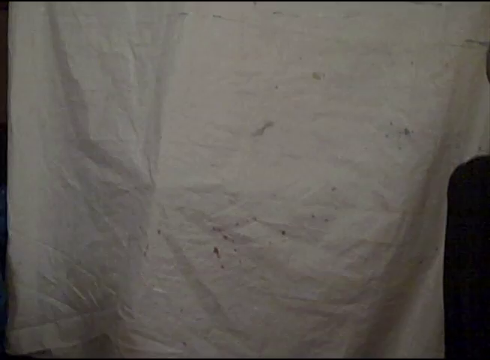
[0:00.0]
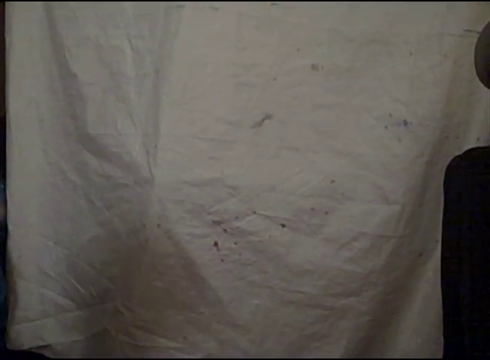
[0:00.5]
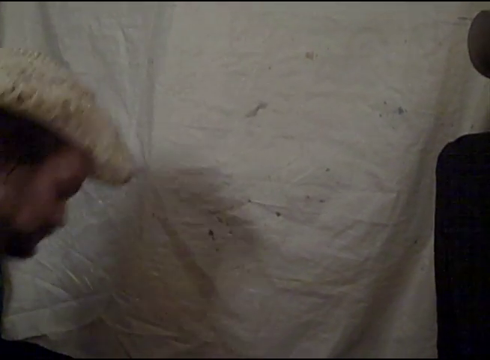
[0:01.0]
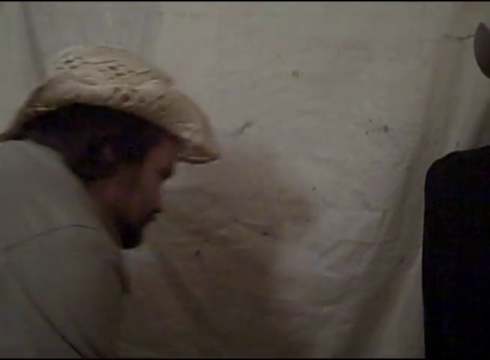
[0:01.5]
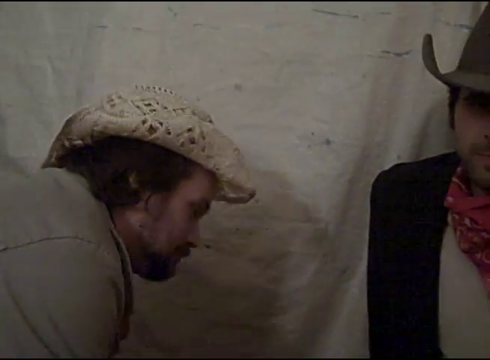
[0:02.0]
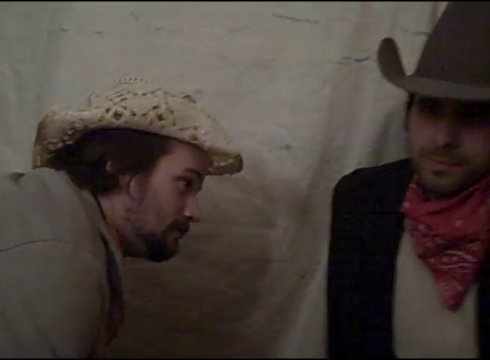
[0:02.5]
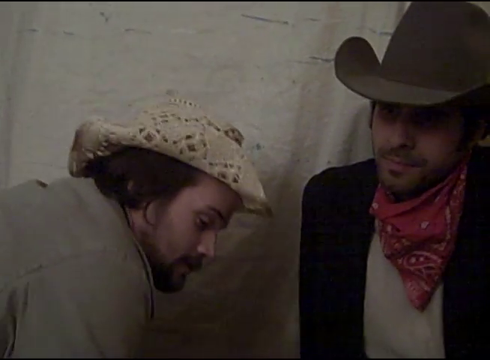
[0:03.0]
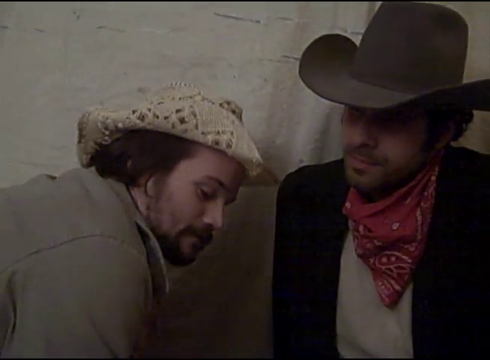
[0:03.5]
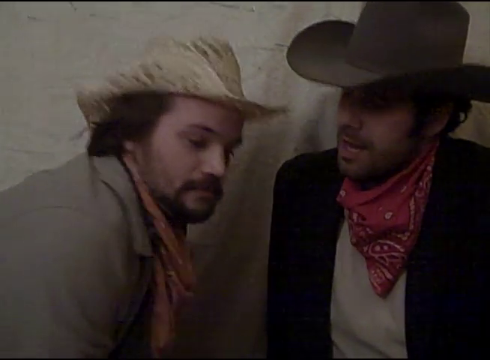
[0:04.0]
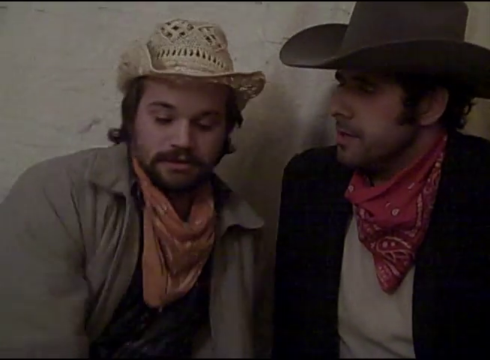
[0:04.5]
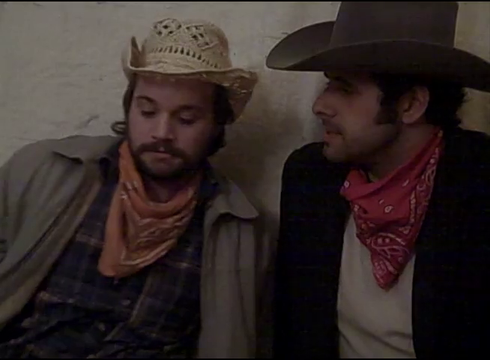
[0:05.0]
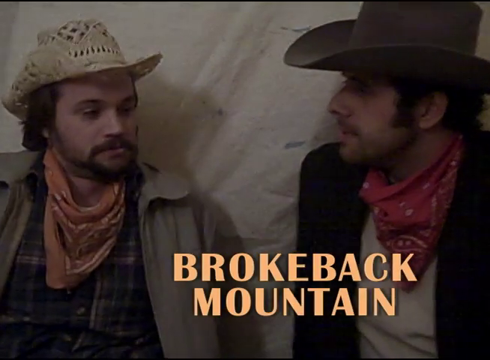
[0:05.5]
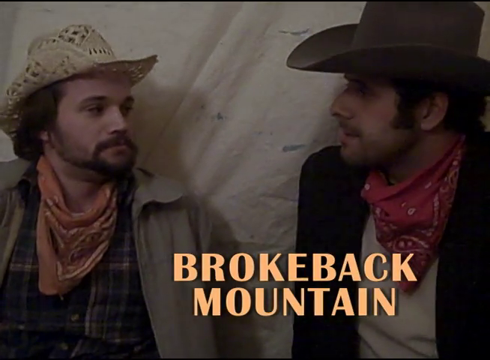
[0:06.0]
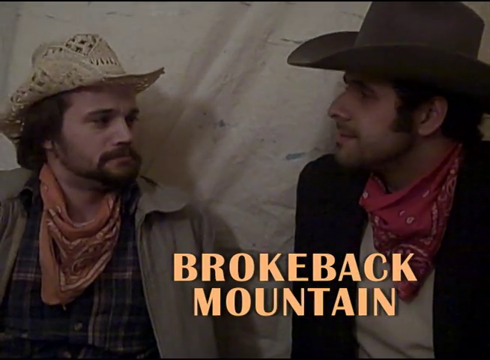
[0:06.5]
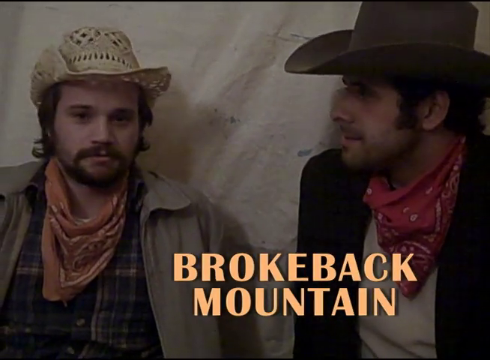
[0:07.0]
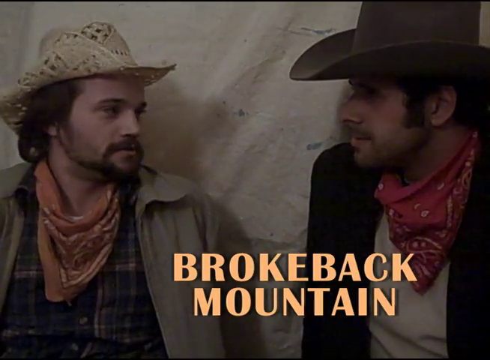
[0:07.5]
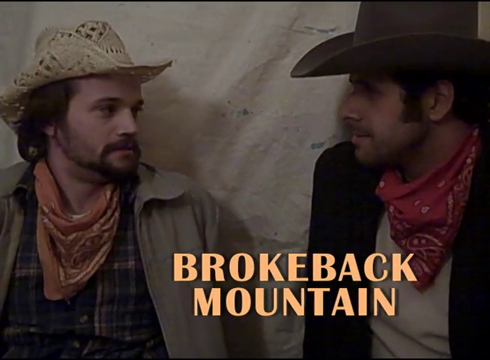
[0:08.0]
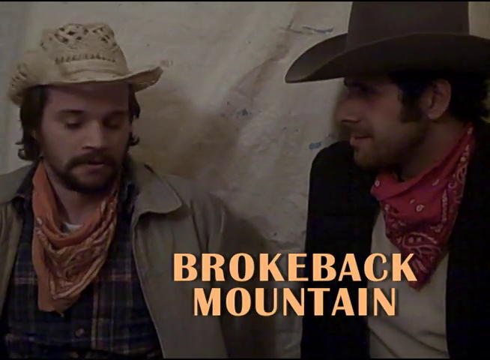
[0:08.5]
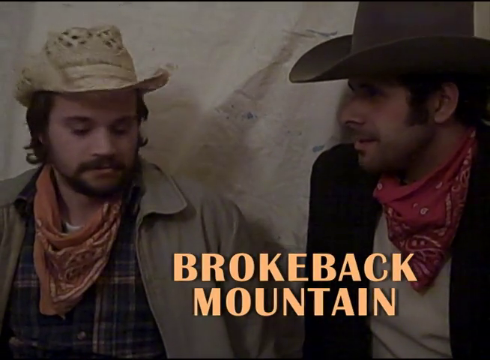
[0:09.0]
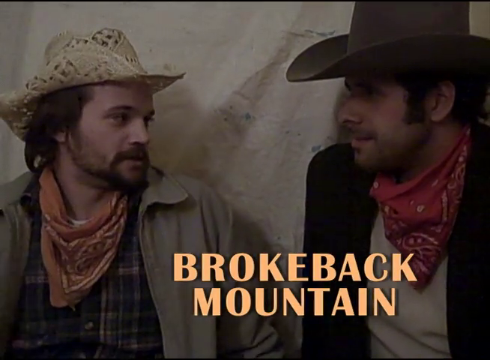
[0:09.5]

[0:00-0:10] Two men appear in what might be a parody of Brokeback Mountain. Behind them hangs what almost looks like an old white sheet with holes in it. The man on the left is seen from the chest up, wearing a white, somewhat macrame-style woven cowboy hat that is not the typical cowboy hat, more like a beach hat. He otherwise wears cowboy clothing: a red bandana hanging from his neck, a collared jacket and what looks like a dark plaid shirt. The video is rather grainy and very shadowy. The man on the left is Caucasian, with a dark beard, a mustache and long brown hair to his shoulders.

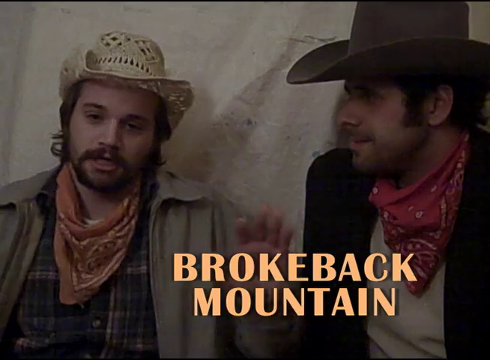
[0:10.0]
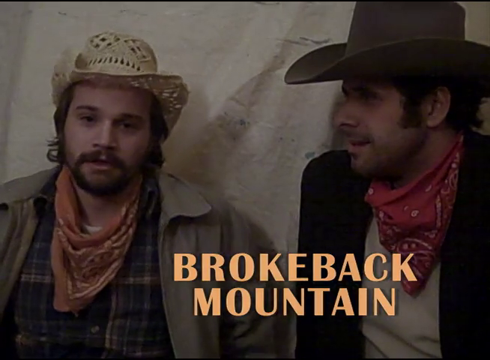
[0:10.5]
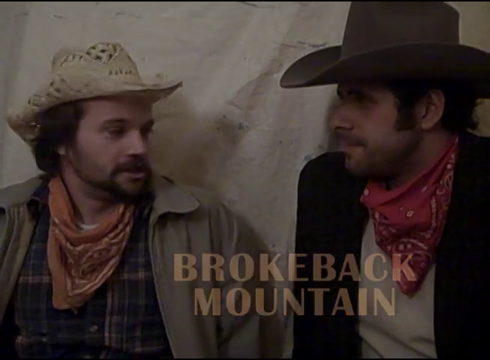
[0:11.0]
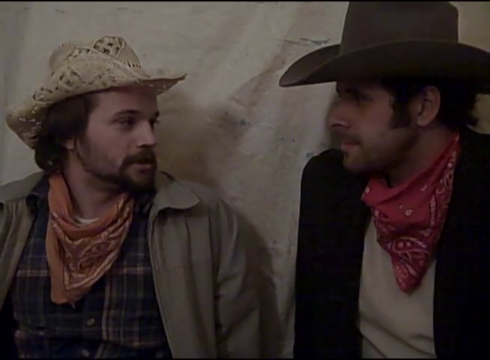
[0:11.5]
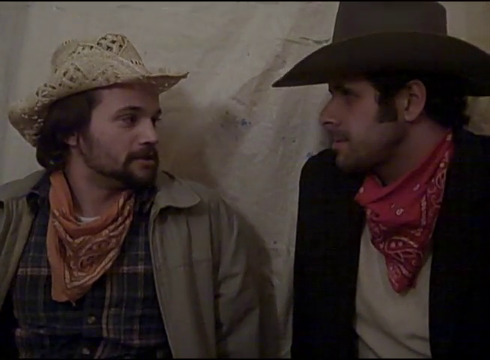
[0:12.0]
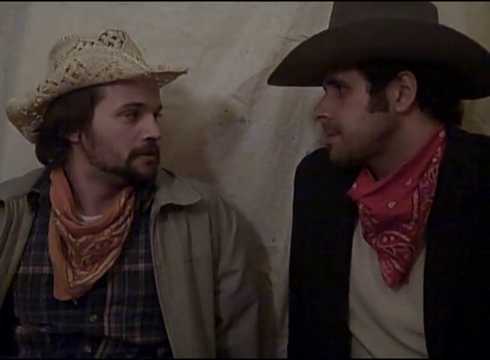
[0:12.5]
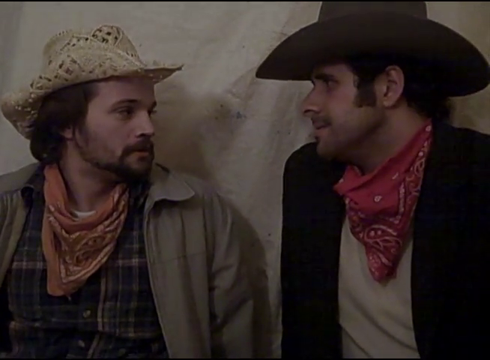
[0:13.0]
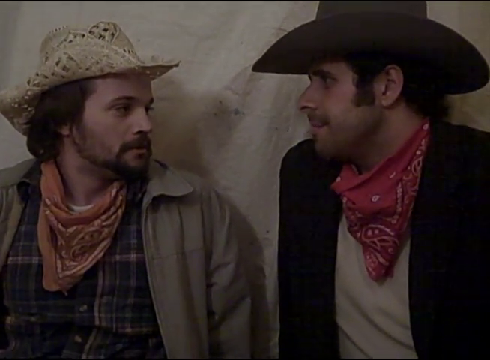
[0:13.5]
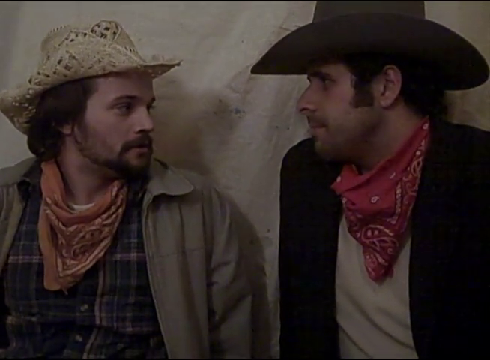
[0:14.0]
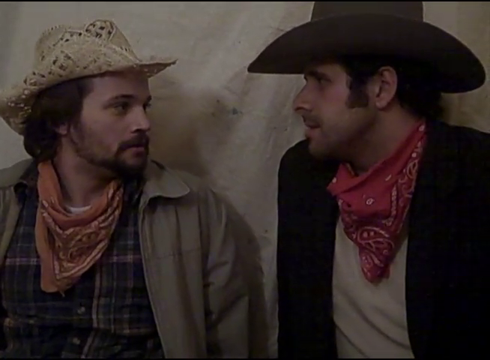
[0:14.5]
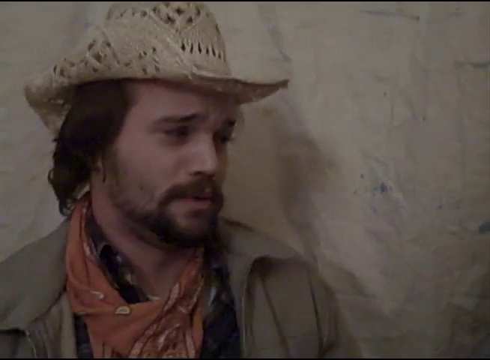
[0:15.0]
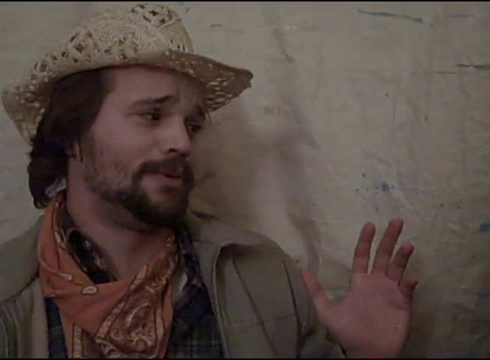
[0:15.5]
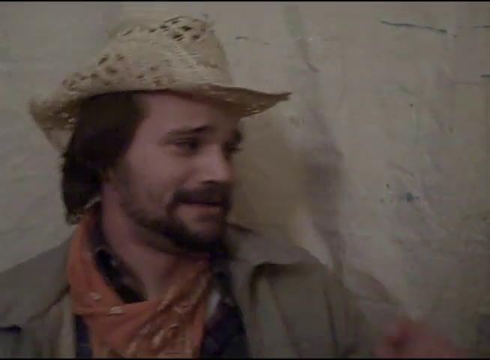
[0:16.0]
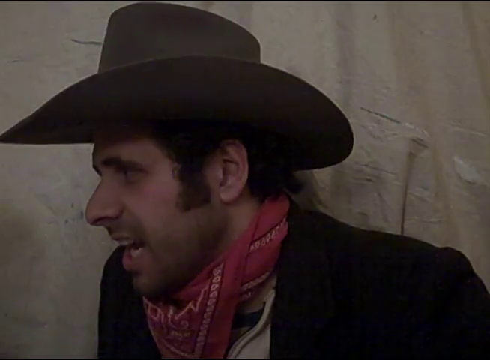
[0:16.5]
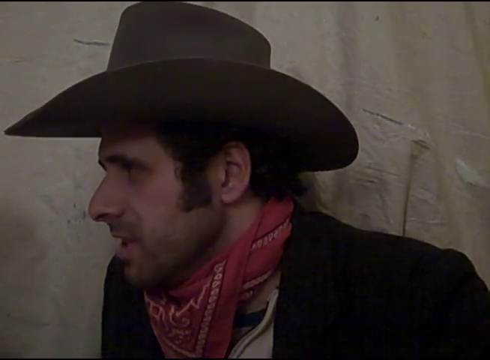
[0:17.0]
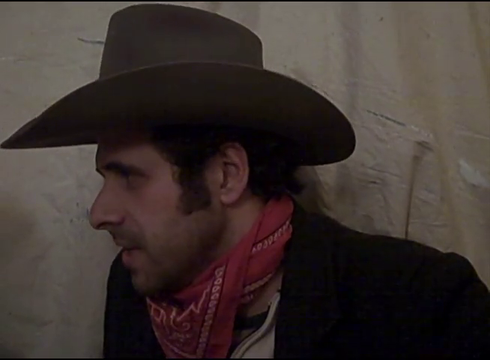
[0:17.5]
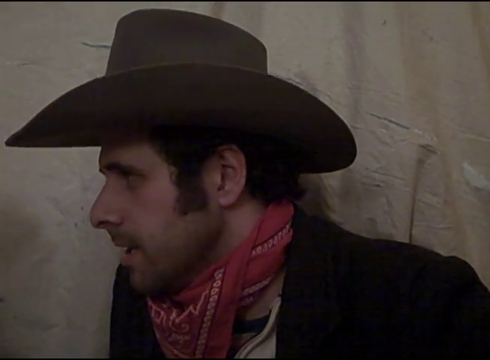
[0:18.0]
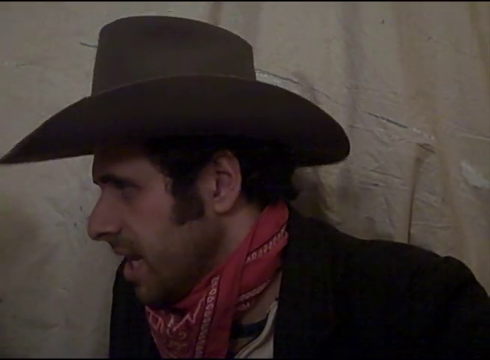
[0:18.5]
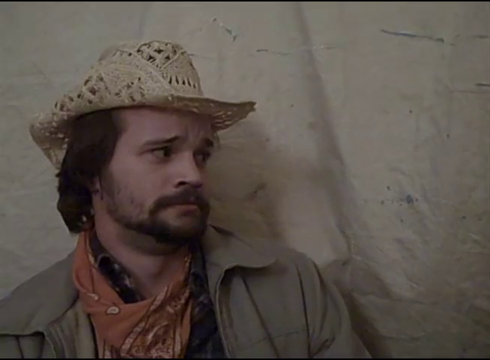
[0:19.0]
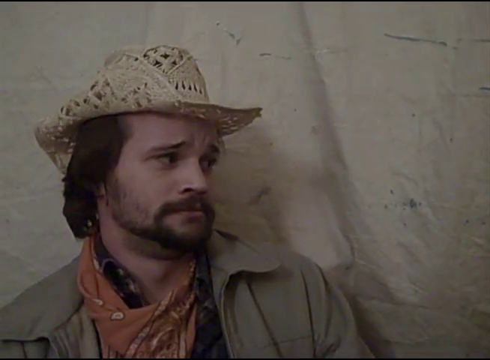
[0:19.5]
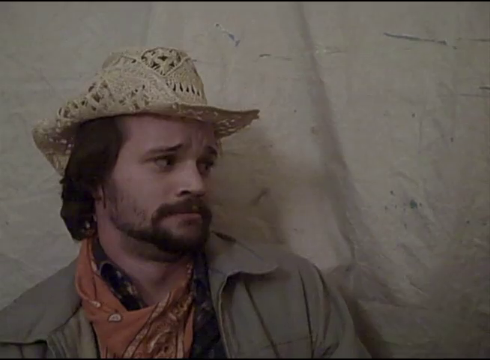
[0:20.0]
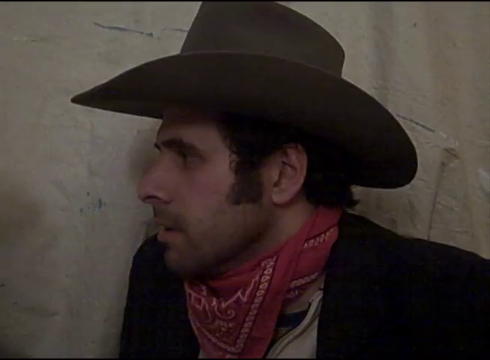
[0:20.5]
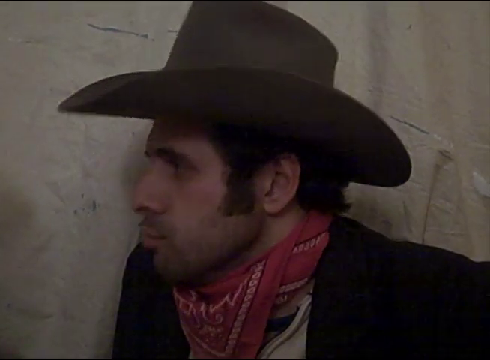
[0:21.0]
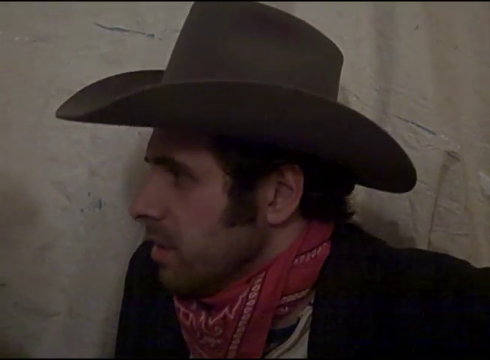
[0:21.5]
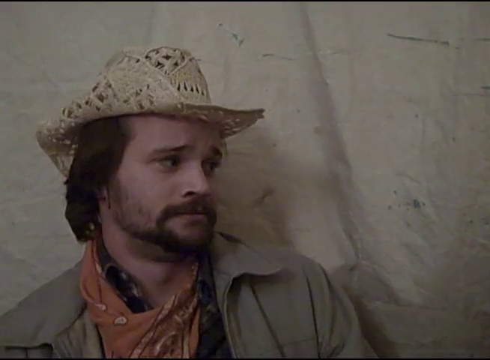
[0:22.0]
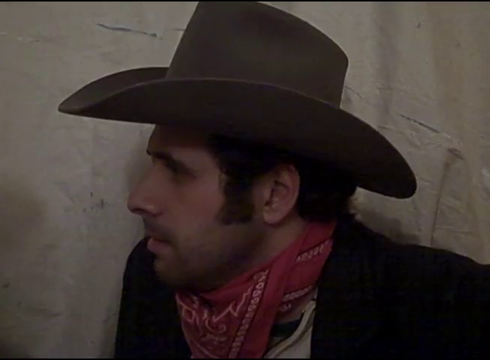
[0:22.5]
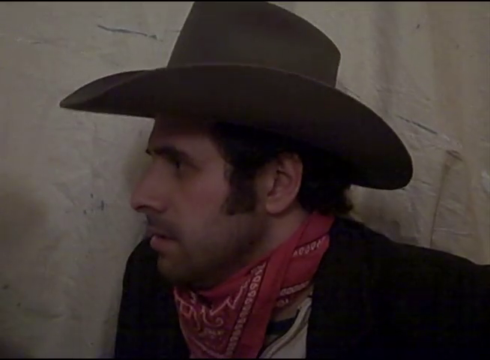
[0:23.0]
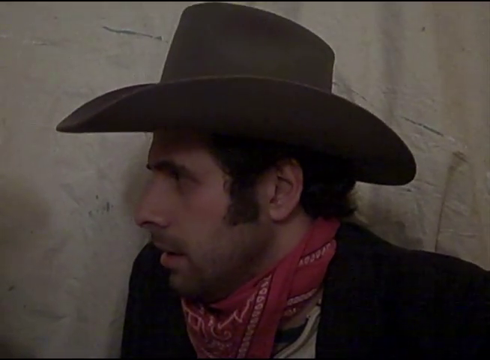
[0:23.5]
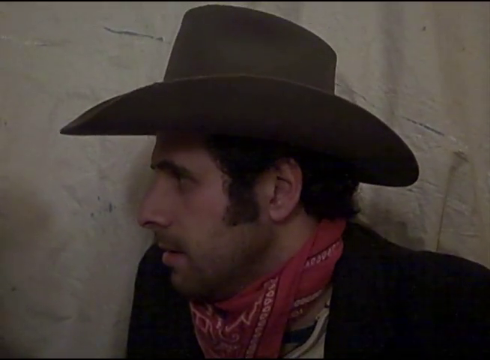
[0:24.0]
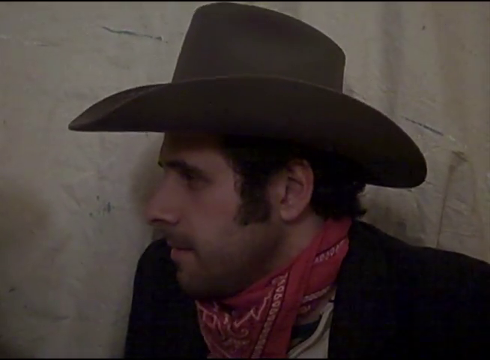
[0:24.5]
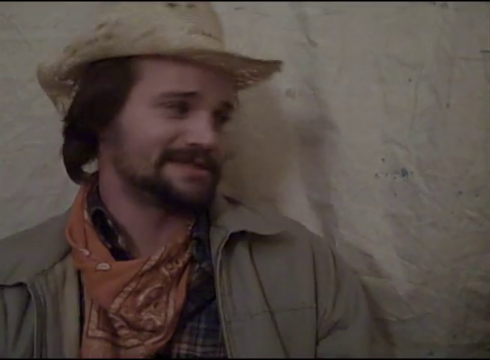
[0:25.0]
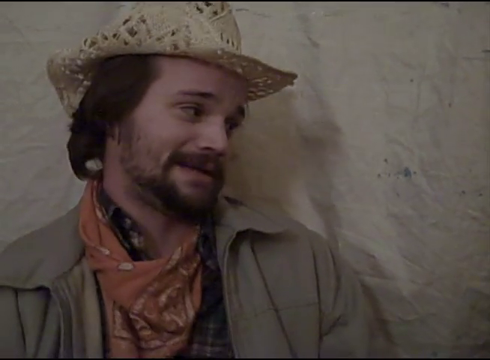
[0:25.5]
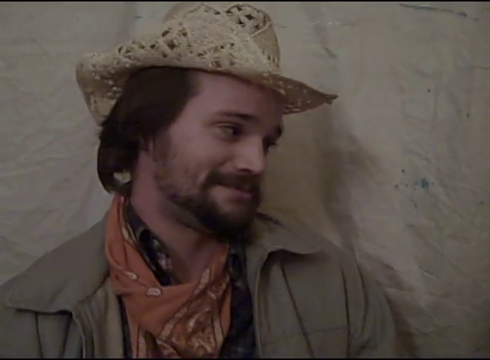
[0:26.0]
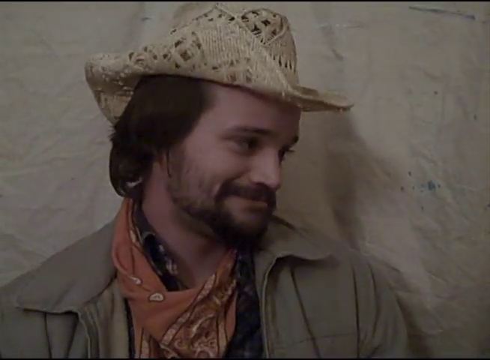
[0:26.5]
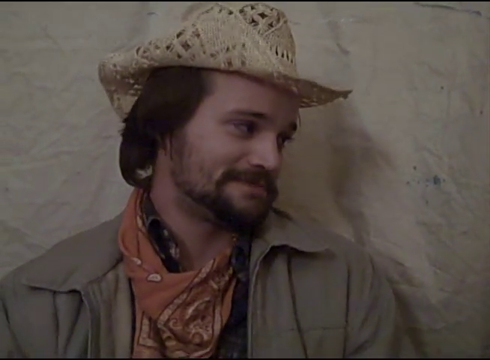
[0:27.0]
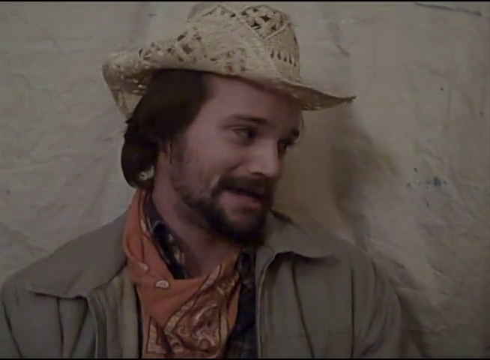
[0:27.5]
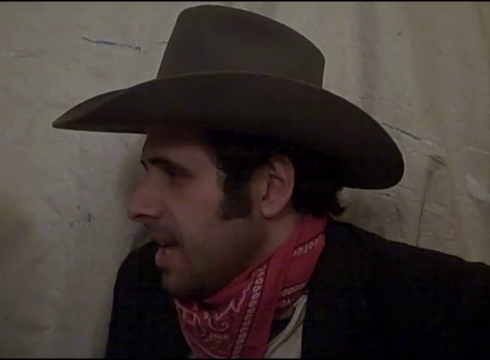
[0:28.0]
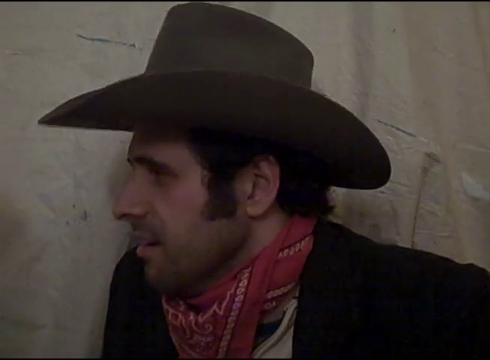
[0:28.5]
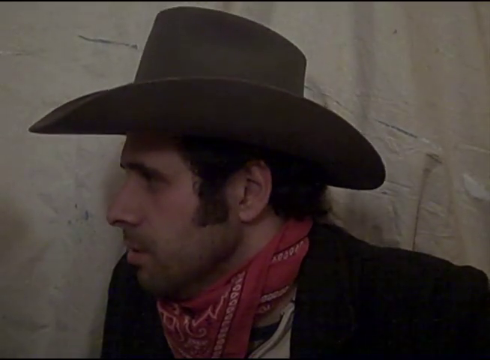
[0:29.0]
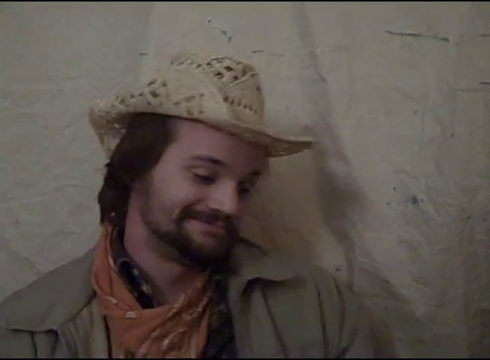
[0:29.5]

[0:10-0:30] In a close-up scene, two men dressed in cowboy clothes are indoors in a dark, grainy video. What looks like a white sheet, somewhat crumpled and with holes in it, hangs behind them. The man on the left wears a woven macrame-style cowboy hat or brimmed hat, a red and white bandana around his neck and a jacket with a collar; he looks to be in his late 20s to 30s and is Caucasian, with a dark beard, a mustache and hair that curls a little at the bottom, and he faces the camera. On the right is another cowboy character wearing a dark cowboy hat, a dark jacket and a red and white bandana. "Brokeback Mountain" is written in yellow text in the lower right corner of the video. The men talk to each other, and the man on the right looks lovingly at the man on the left. The shots pan quickly from right to left in quick close-up clips of their faces.